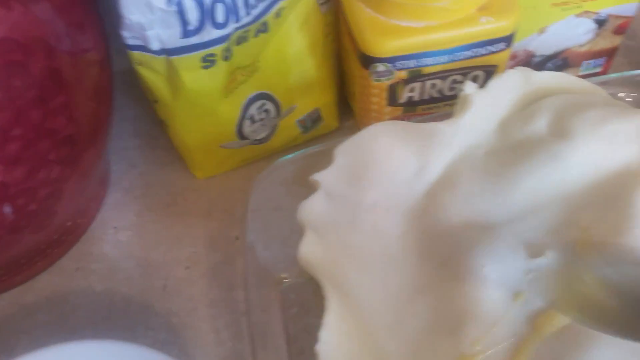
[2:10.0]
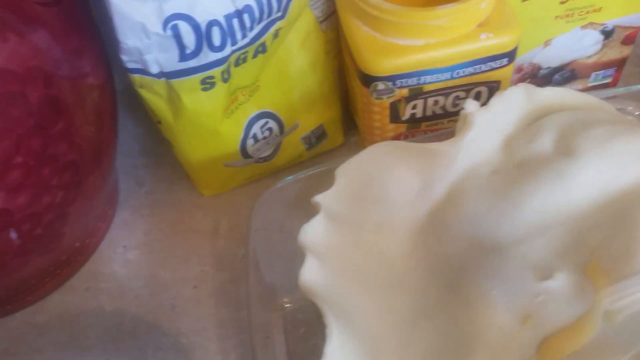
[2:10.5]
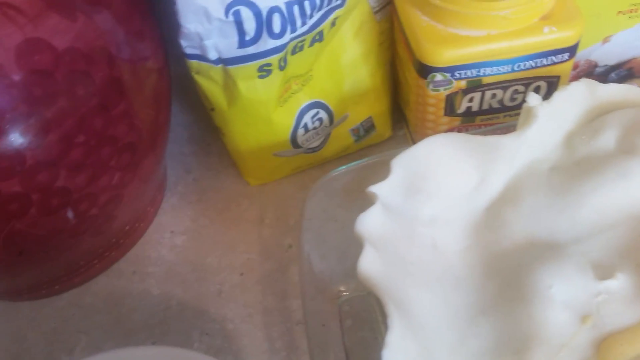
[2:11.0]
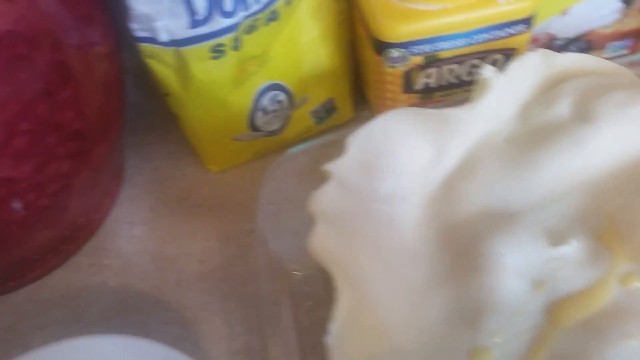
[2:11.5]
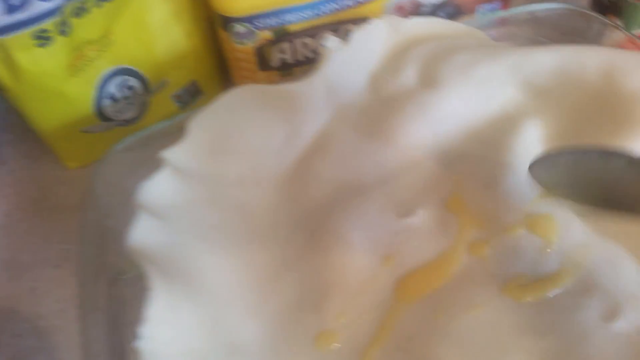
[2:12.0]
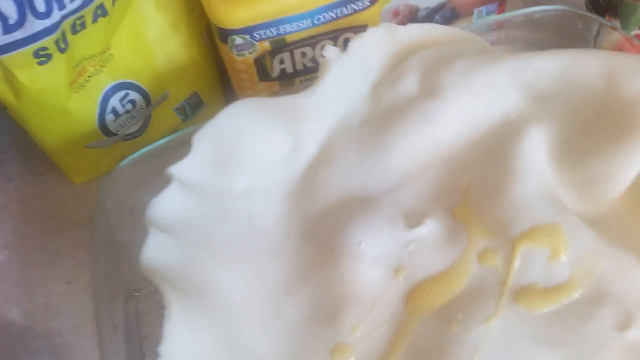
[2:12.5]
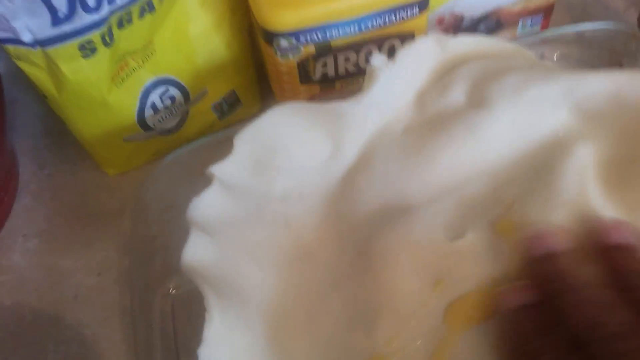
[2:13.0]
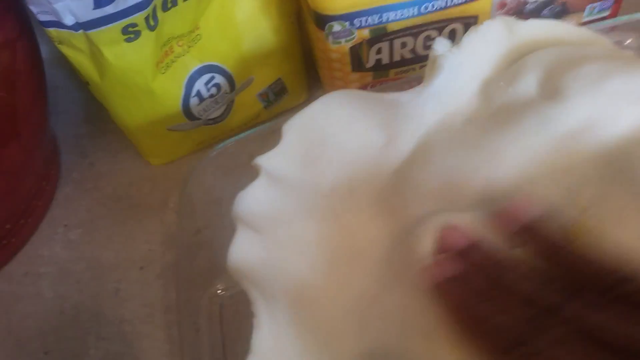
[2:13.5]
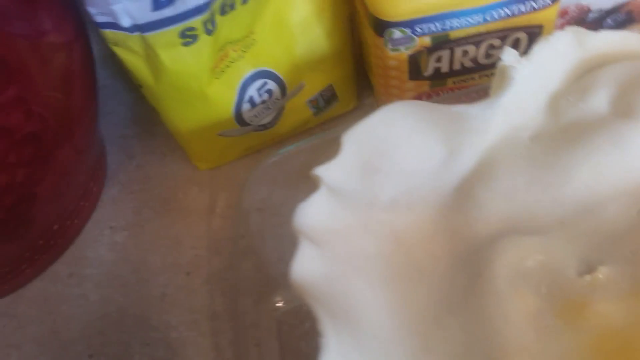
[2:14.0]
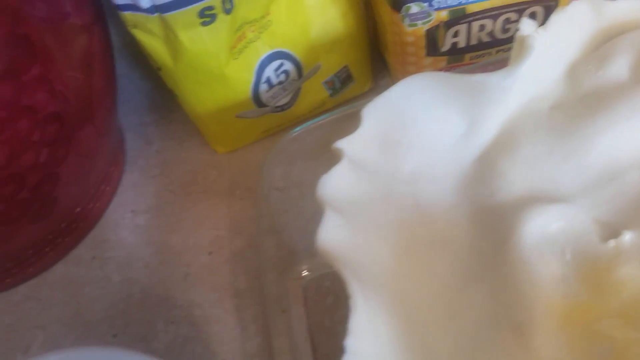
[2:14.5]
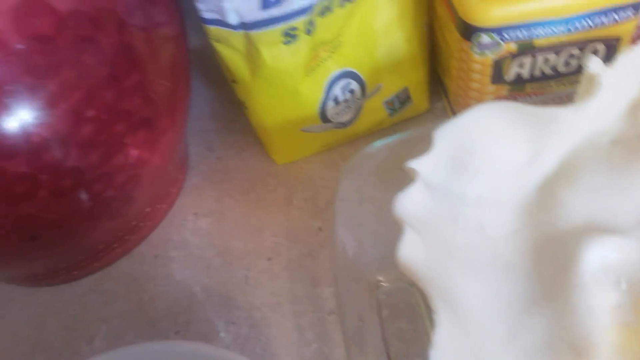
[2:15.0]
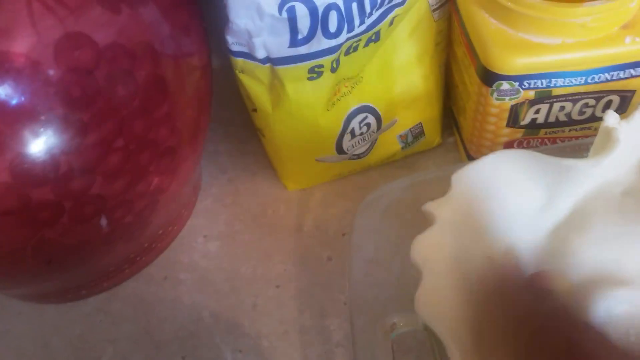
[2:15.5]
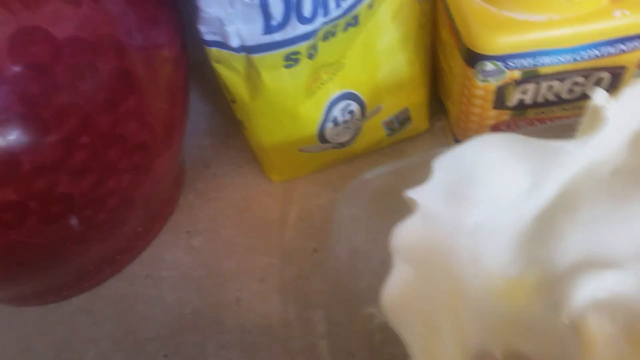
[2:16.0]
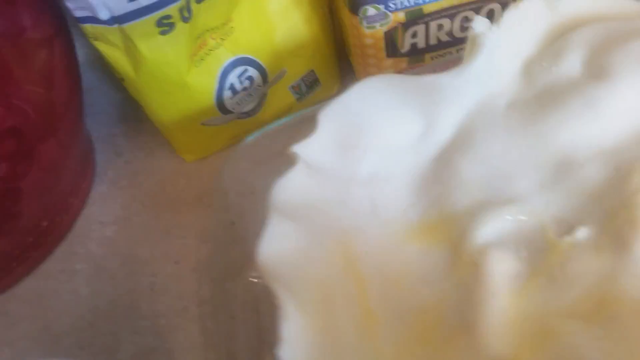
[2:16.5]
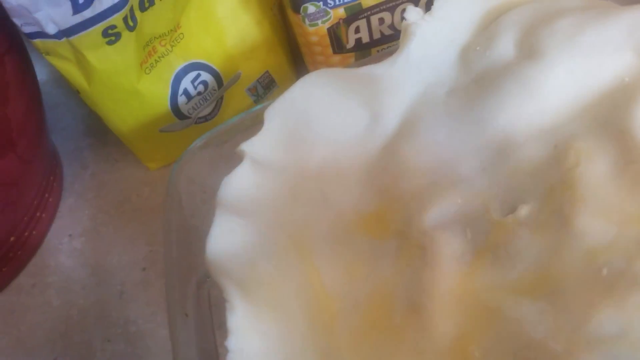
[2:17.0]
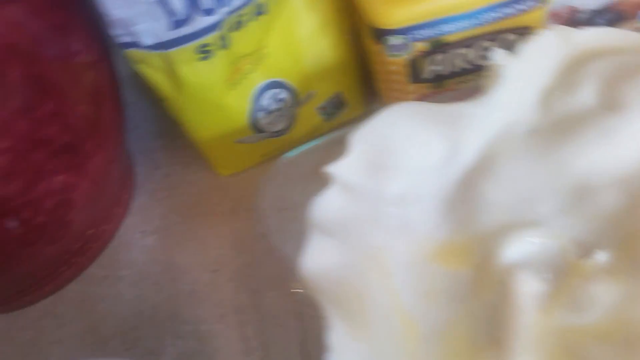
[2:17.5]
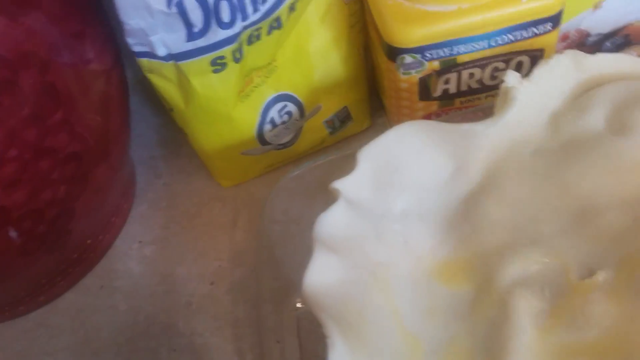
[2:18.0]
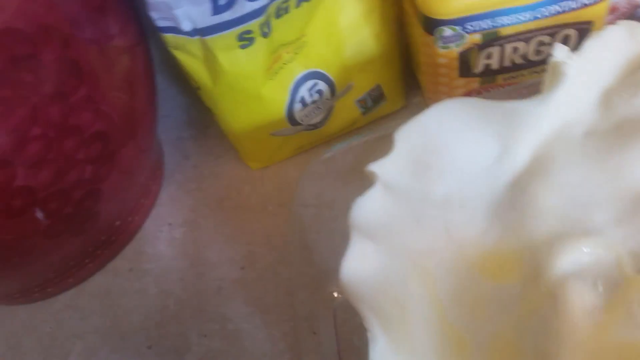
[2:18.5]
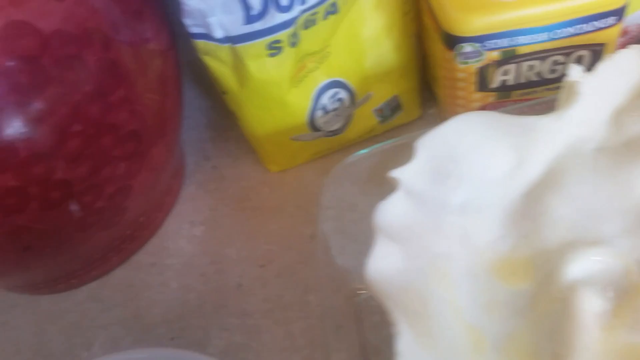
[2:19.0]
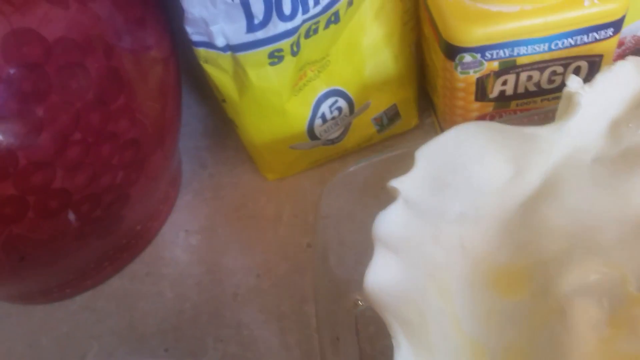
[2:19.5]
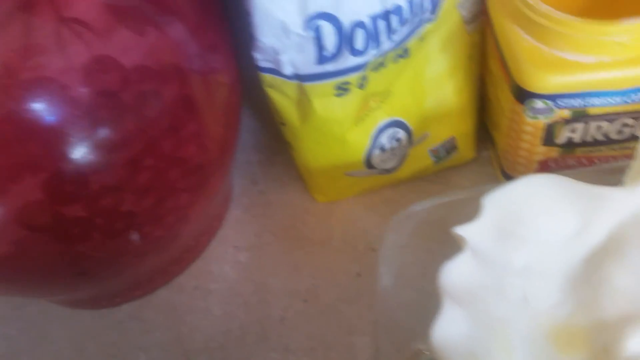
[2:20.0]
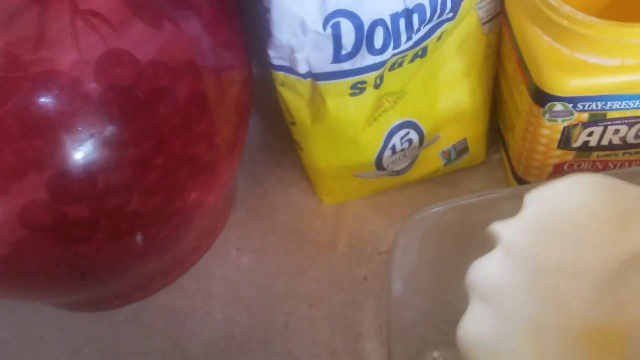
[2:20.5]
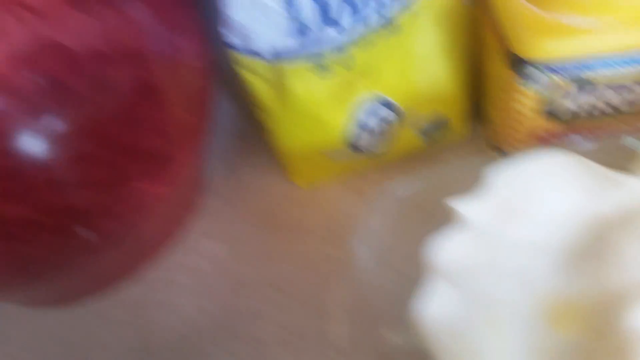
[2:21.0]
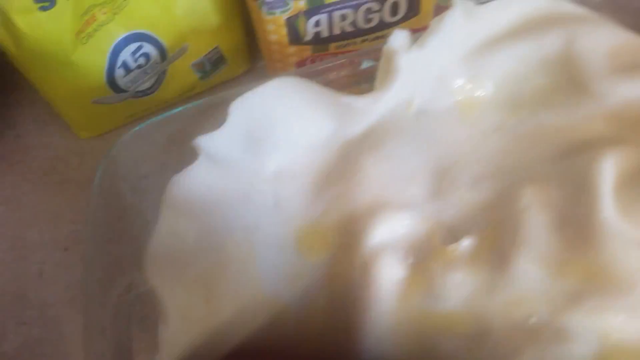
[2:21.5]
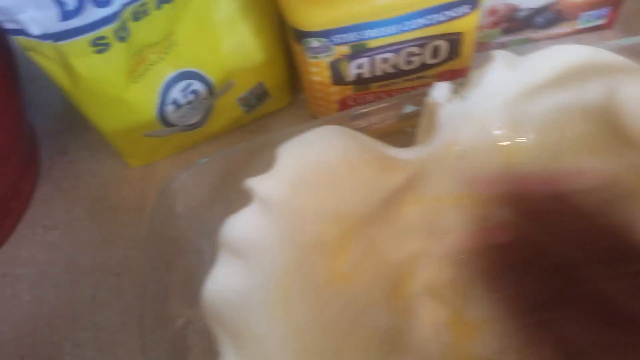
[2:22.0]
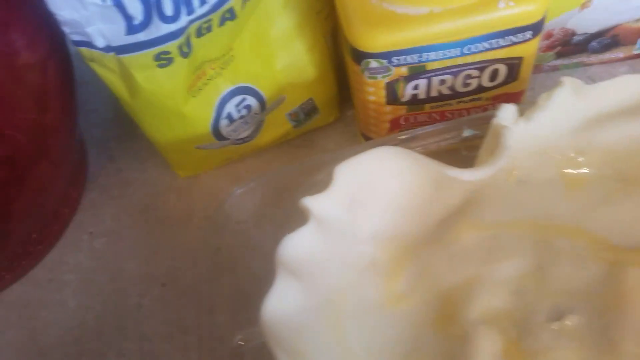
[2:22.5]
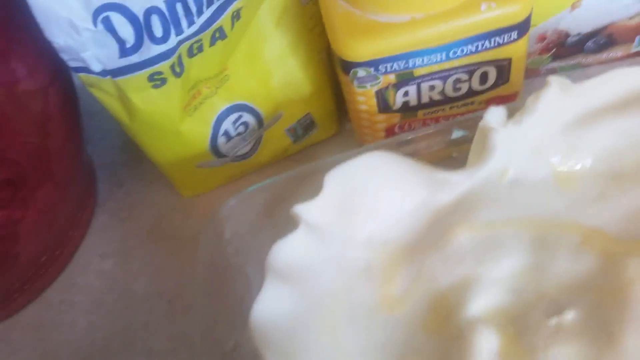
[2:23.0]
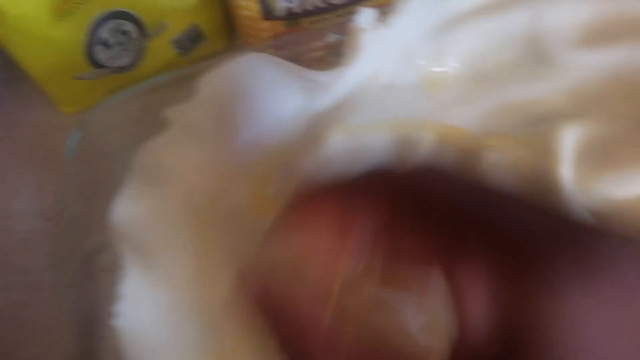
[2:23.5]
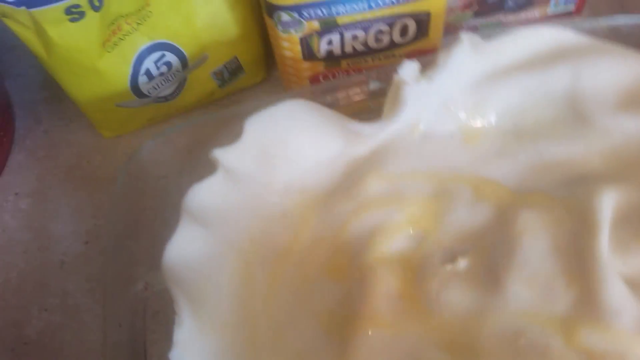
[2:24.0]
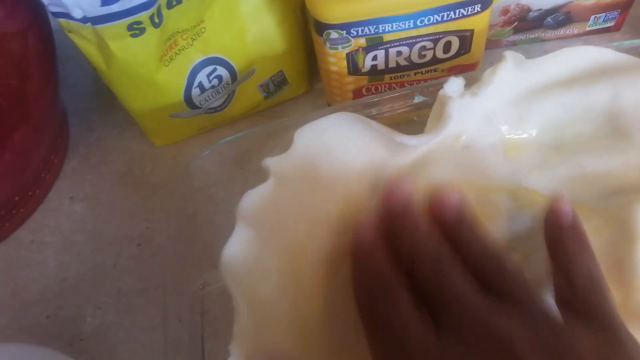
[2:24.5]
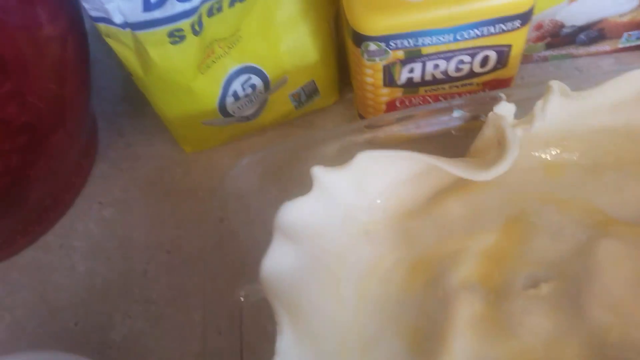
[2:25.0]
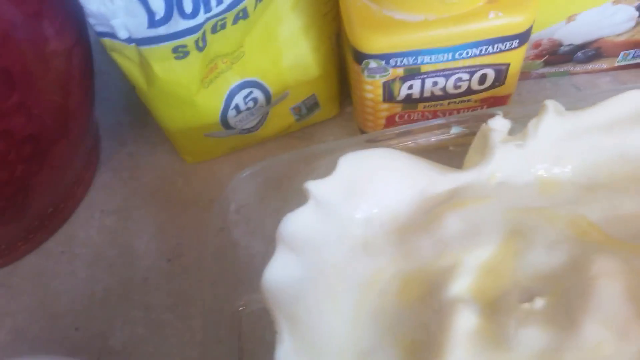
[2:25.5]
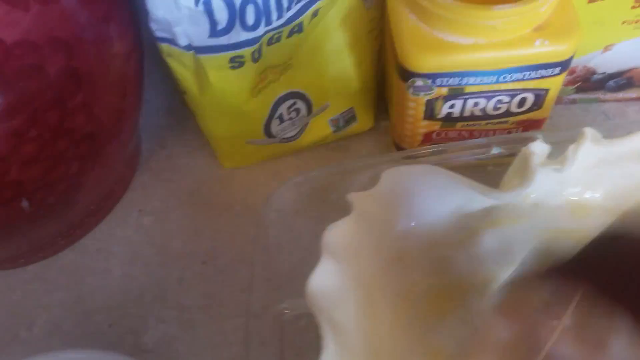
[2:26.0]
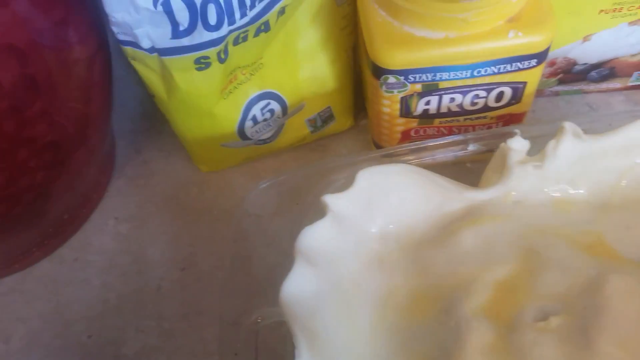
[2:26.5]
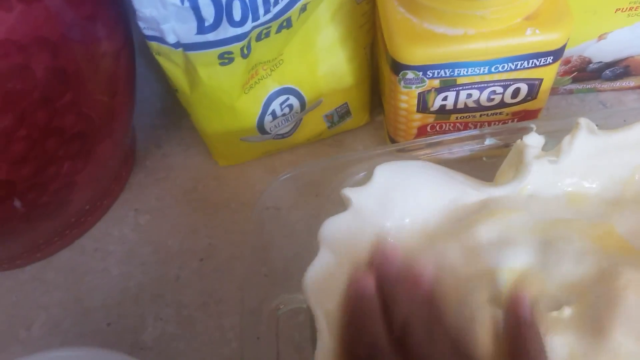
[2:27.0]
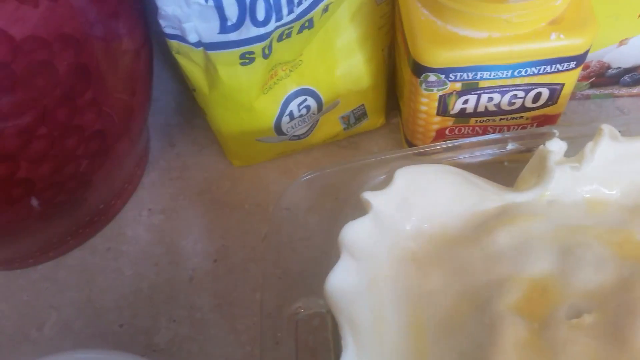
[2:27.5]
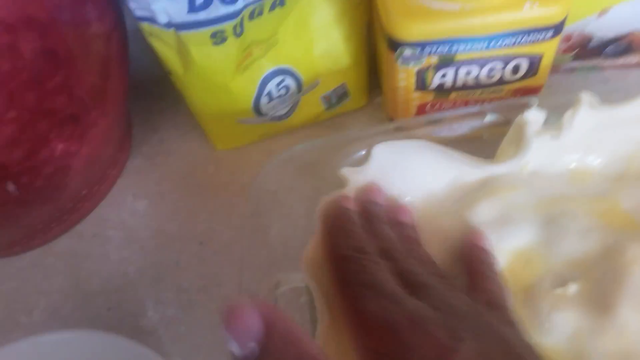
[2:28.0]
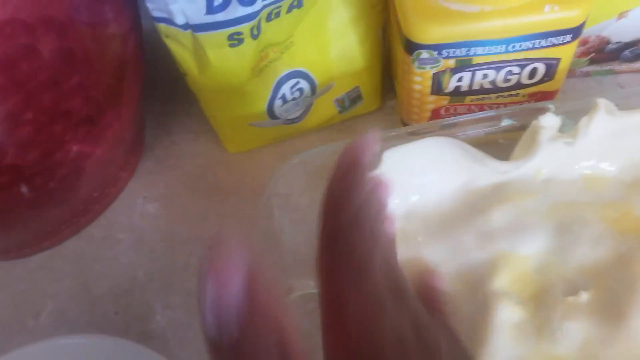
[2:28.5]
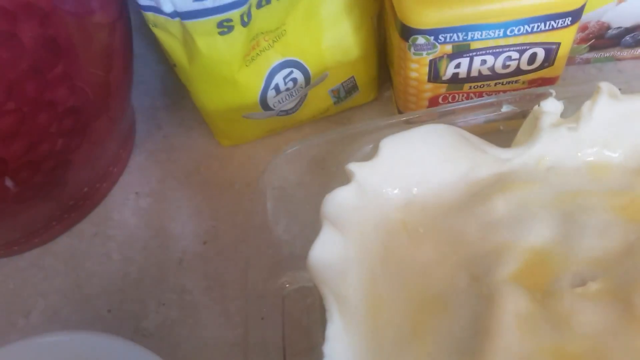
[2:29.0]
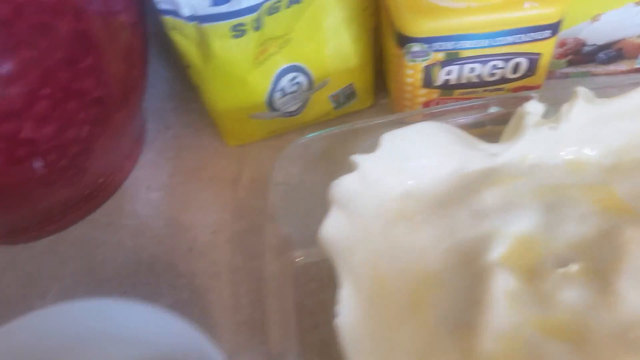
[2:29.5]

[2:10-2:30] The individual puts the pie crust on top of the filling of apple, cinnamon, sugar, butter, and other ingredients. Sugar, Argo, and a red vase are shown. The individual then butters or oils the top of the pie crust. No other people or animals appear, and the setting does not change.